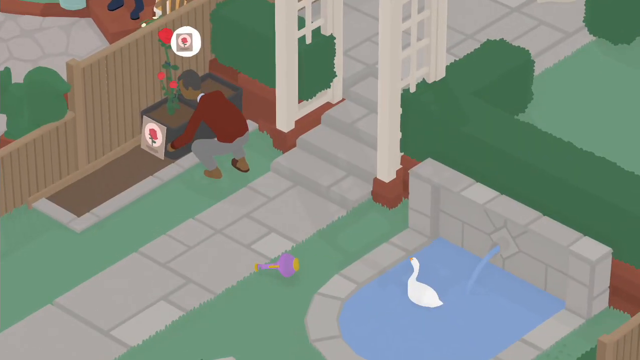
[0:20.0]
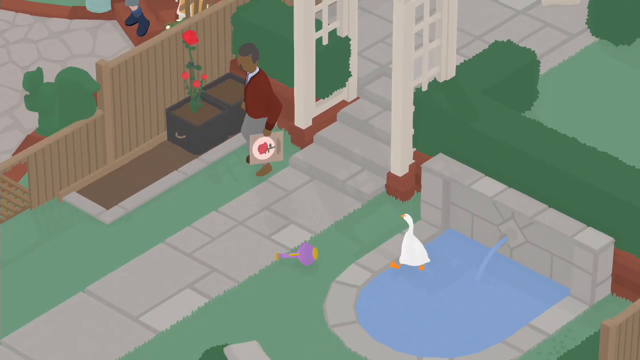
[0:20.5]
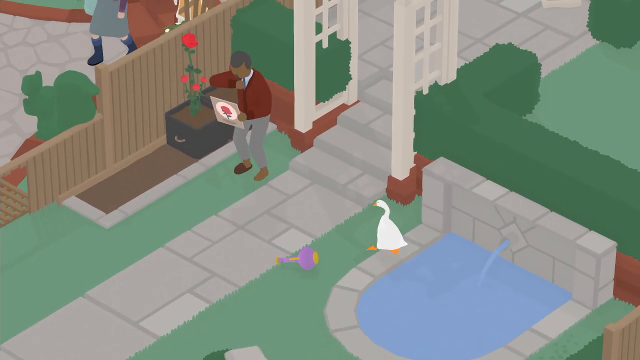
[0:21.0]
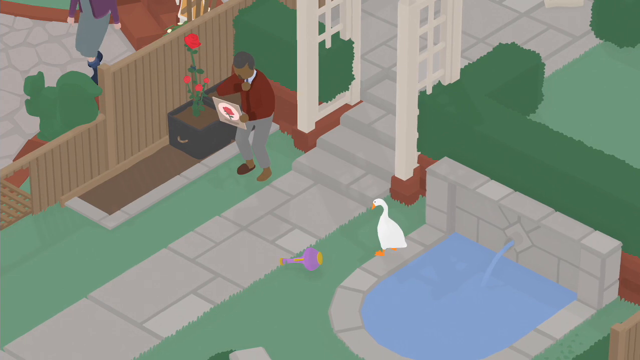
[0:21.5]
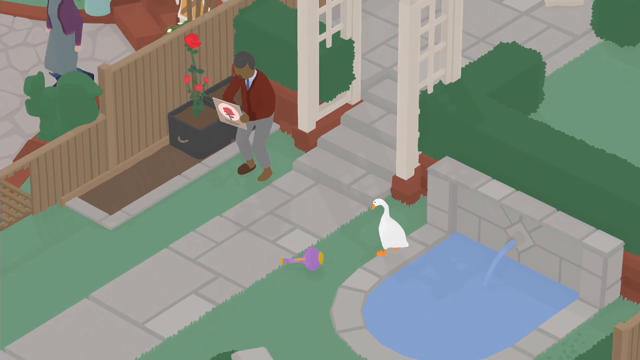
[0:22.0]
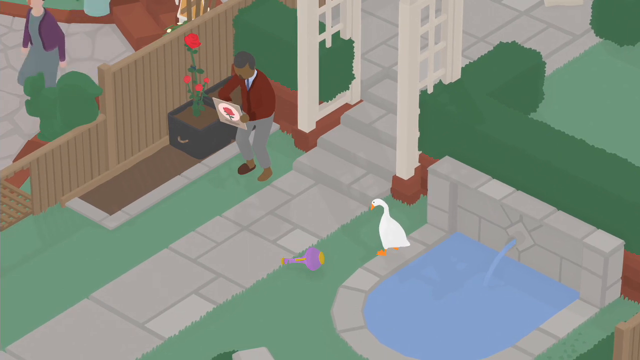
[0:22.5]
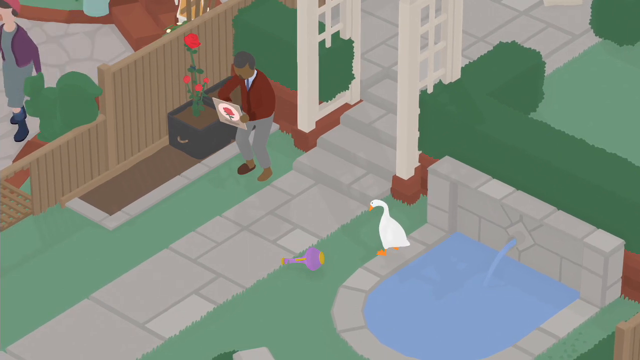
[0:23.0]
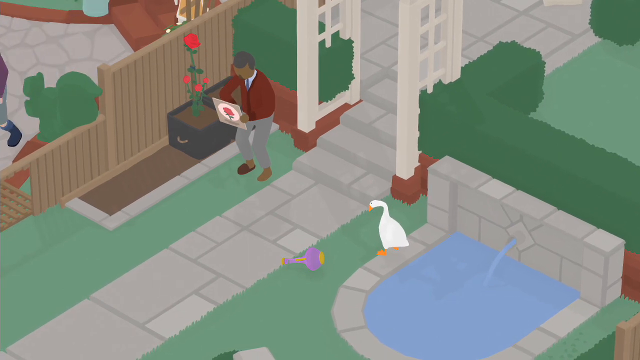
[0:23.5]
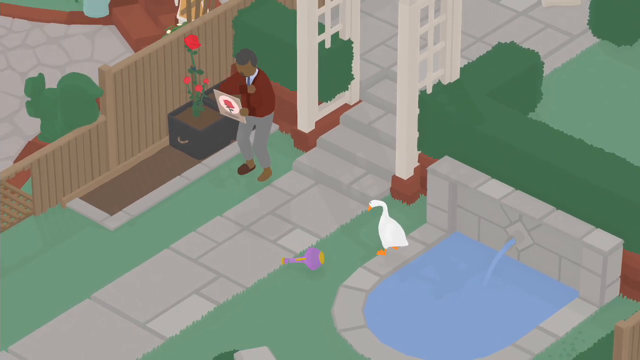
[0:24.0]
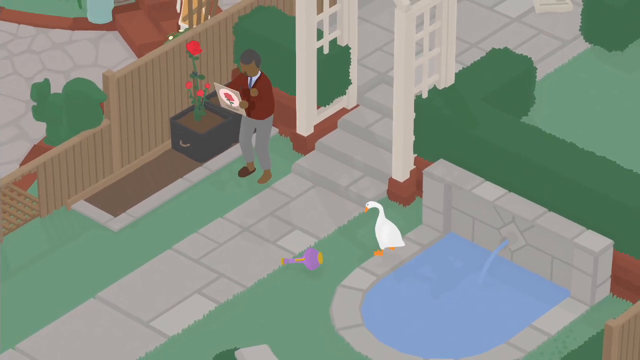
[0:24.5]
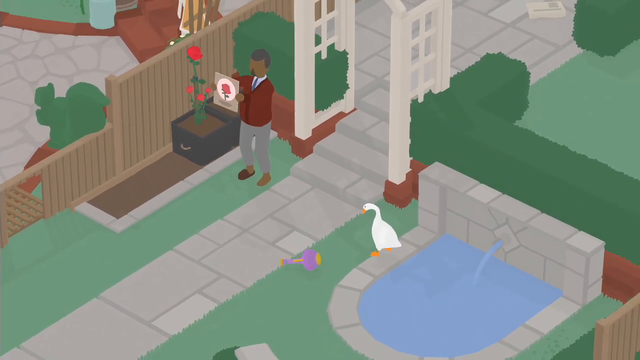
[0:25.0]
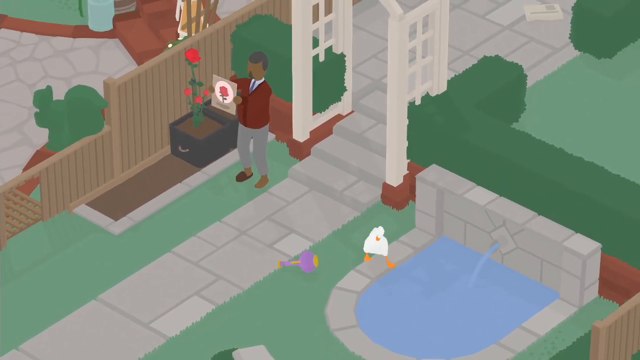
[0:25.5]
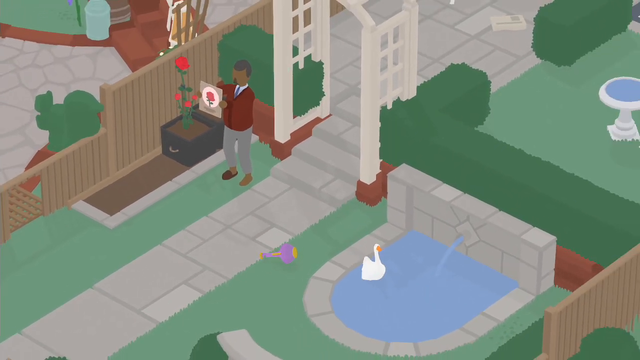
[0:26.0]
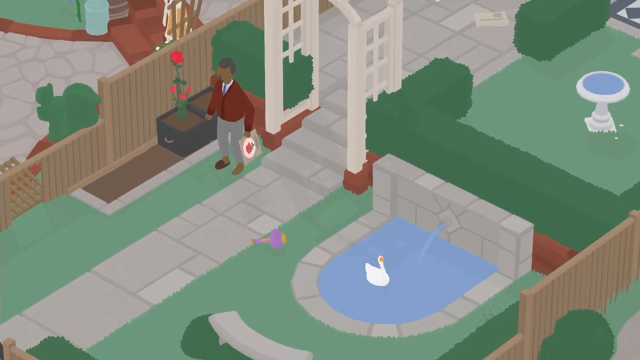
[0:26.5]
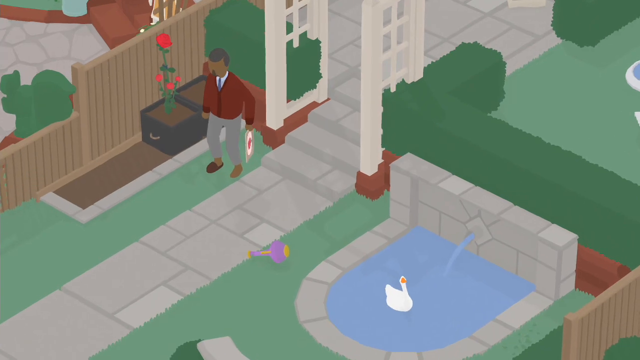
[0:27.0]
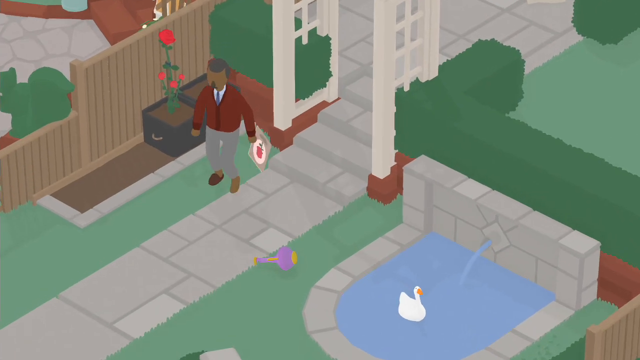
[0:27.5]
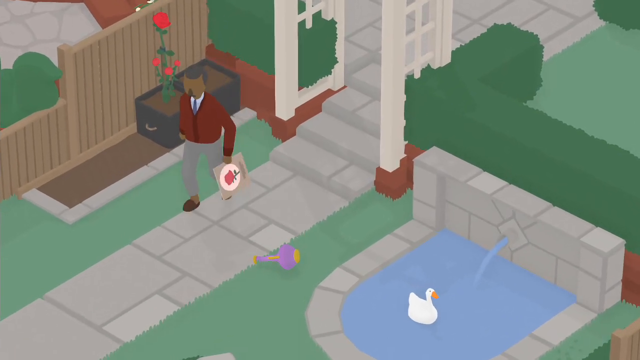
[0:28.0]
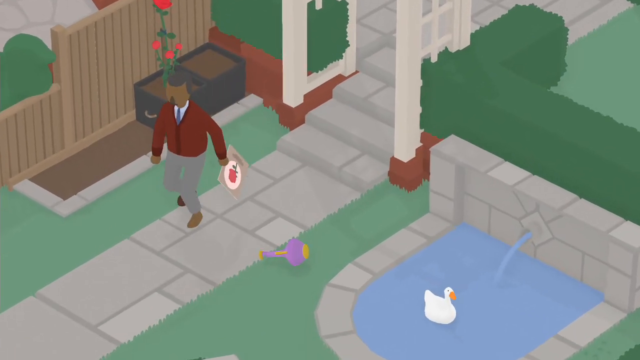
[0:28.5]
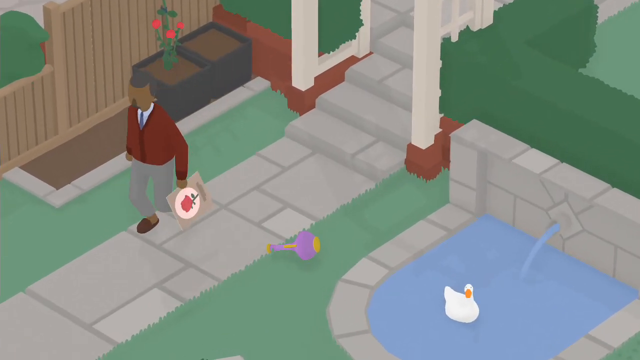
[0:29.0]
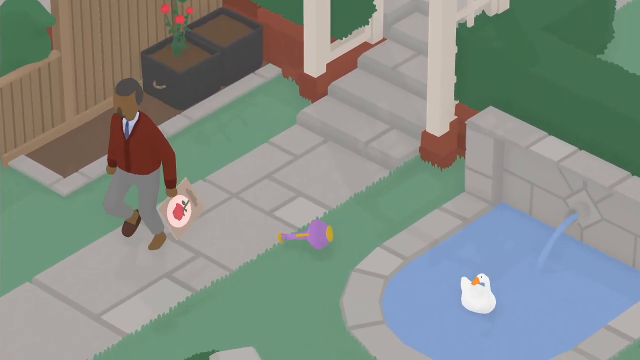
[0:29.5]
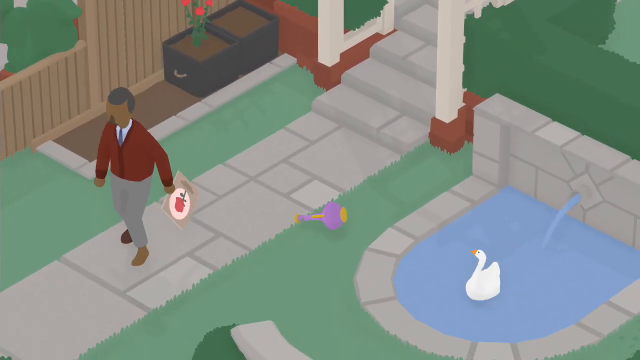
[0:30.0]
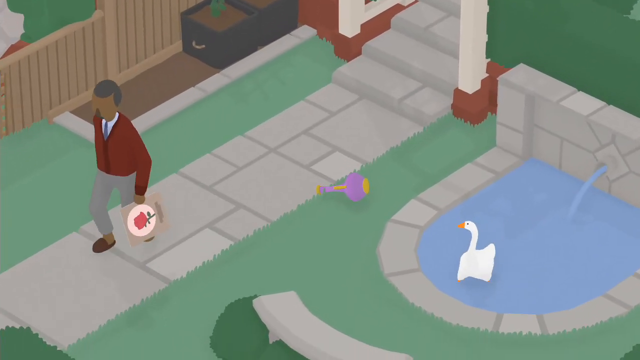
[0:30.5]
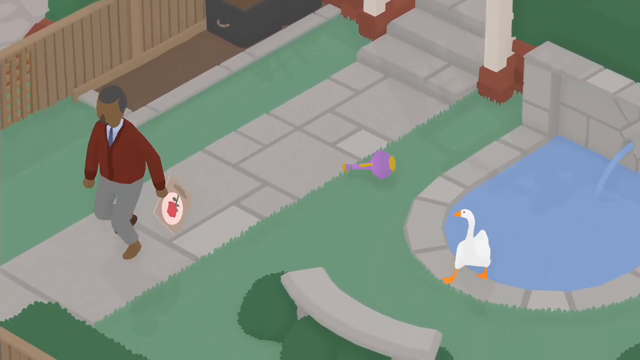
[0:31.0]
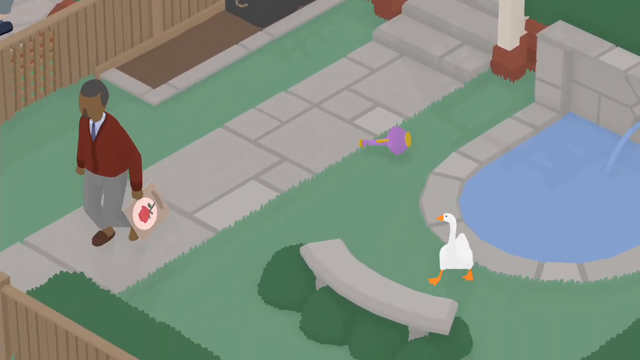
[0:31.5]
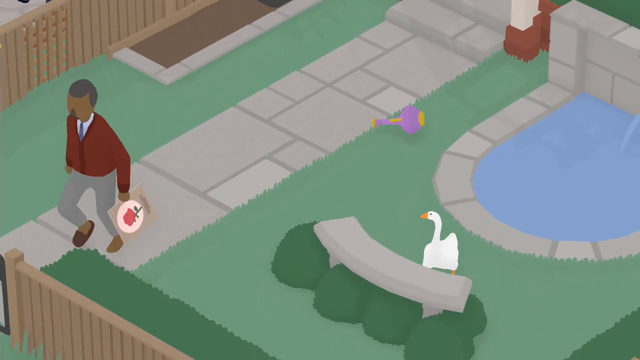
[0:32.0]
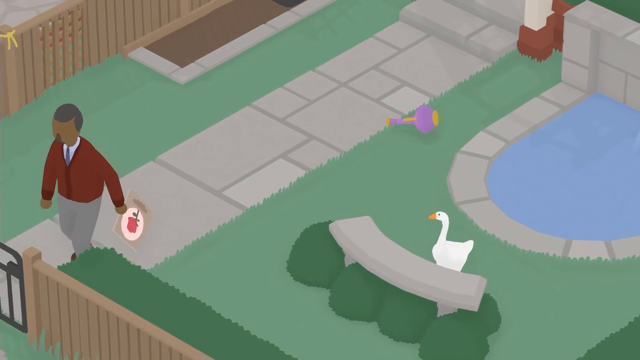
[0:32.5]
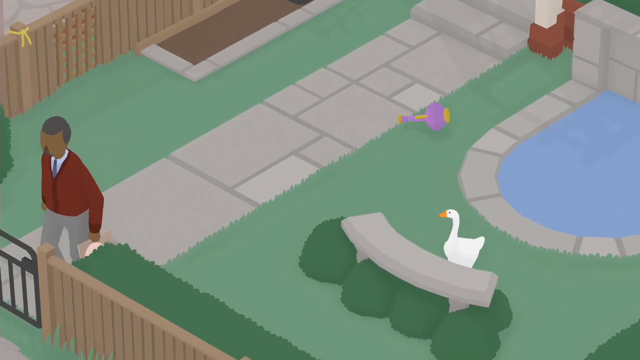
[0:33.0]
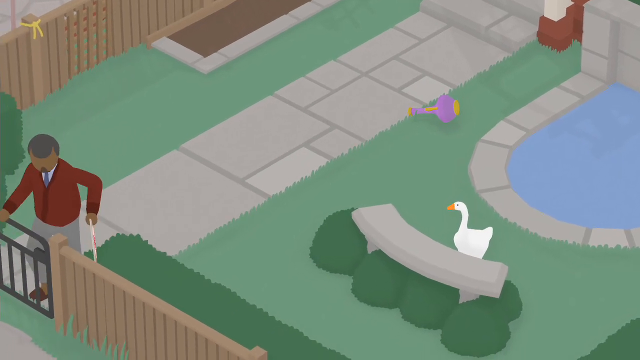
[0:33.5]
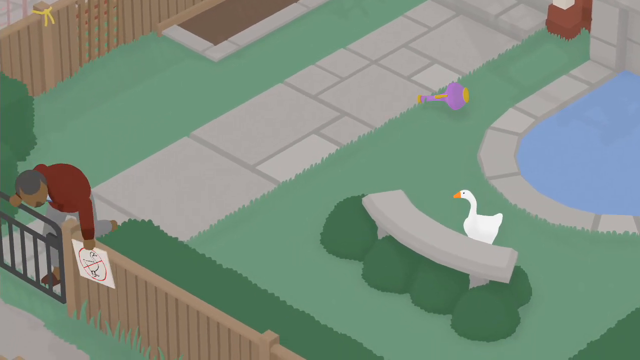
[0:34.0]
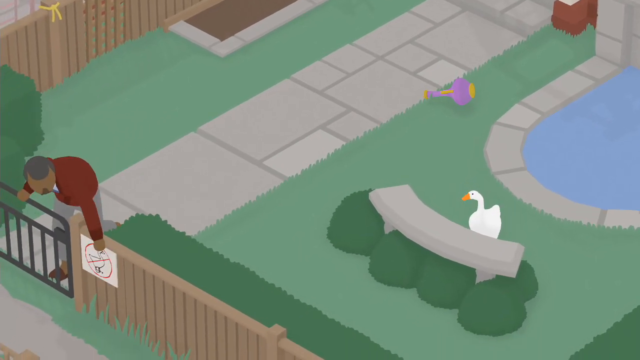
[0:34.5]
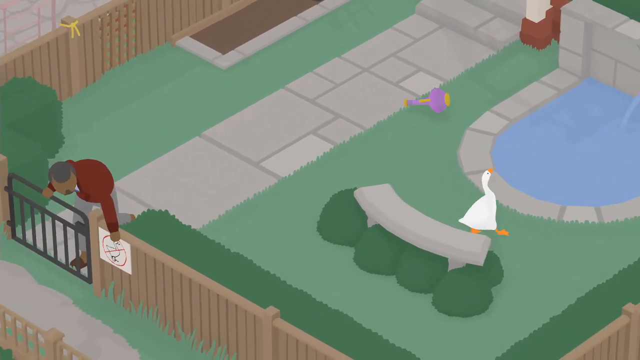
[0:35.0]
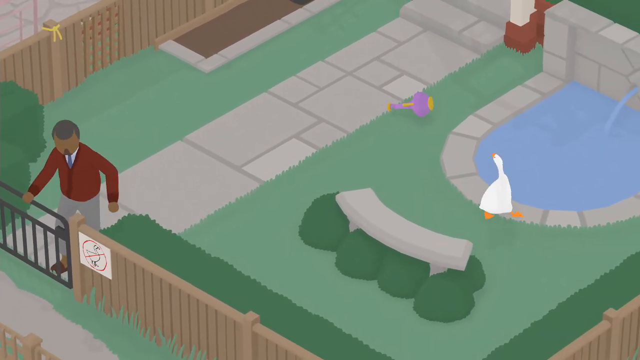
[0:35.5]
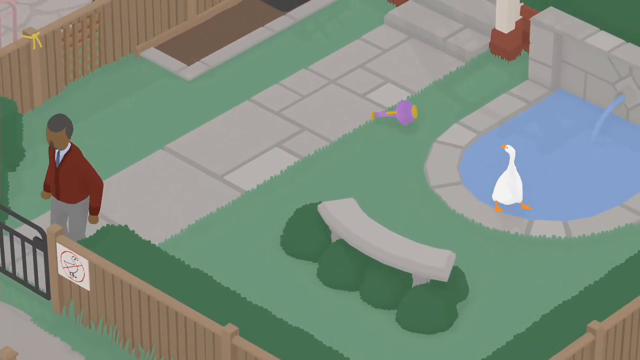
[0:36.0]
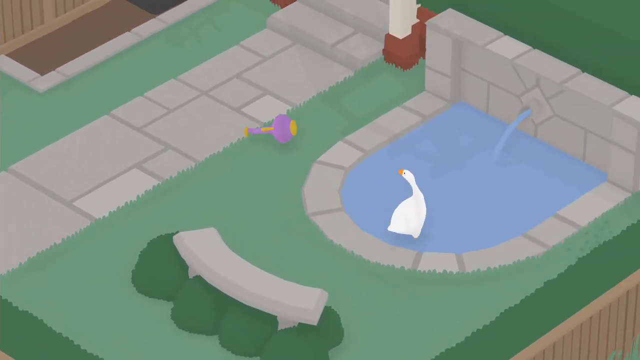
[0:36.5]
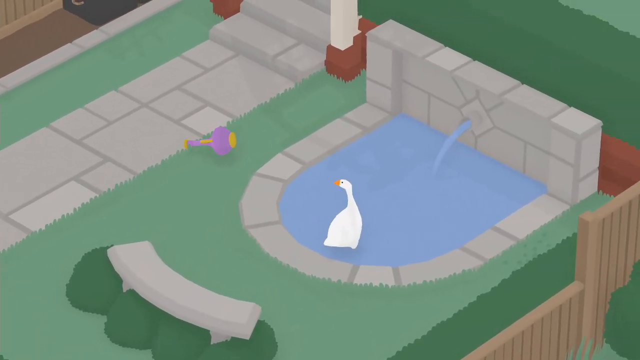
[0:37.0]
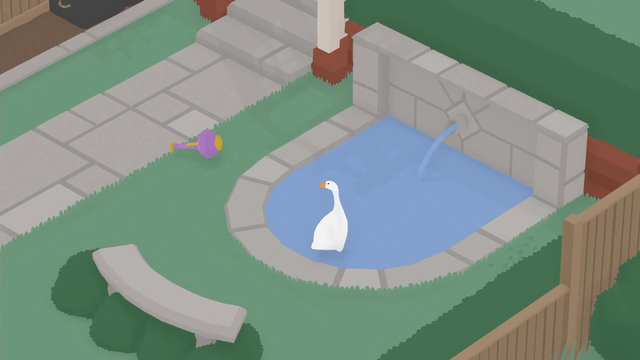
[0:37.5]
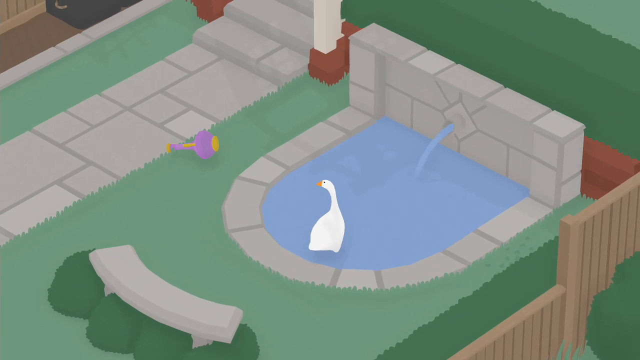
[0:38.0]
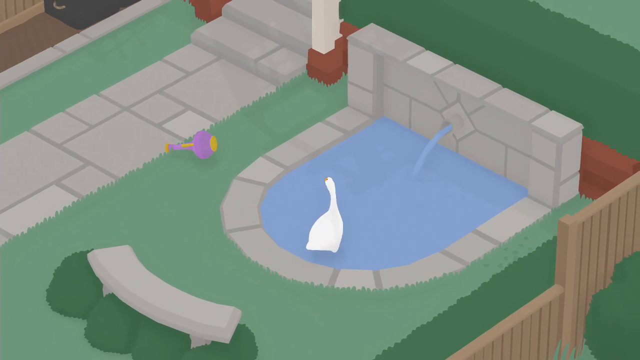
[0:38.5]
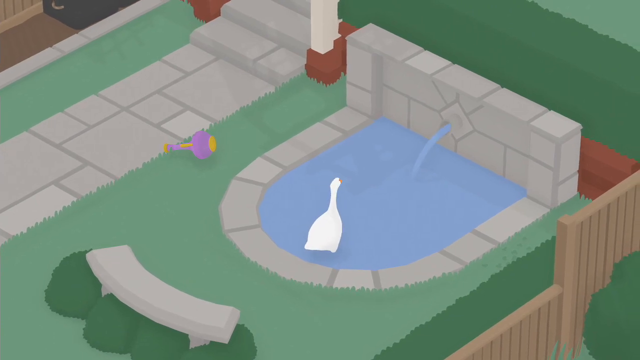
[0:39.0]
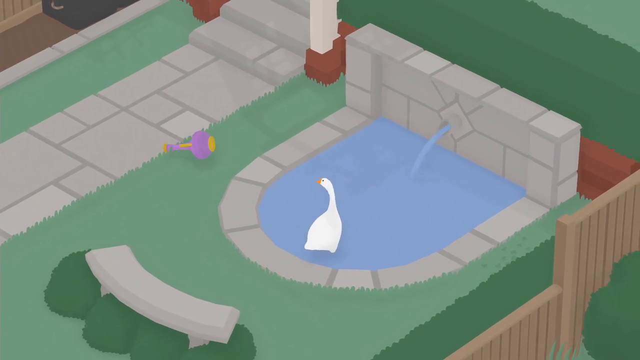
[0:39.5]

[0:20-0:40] A duck is in a fountain with running water. It hops out onto the end of the fountain and looks at the man, who has picked up a picture of a rose next to a rose plant on the right side of his garden. The duck looks at the purple vase. The man picks up the drawing and raises it. The duck runs back into the water and swims around while the man walks slowly down the path of his garden to a fence and puts a no duck sign along his fence line. The duck then walks out of the water and back into the fountain. The camera zooms in and out to show the man and the duck. The duck is very close to the bench as it watches the man putting the poster down.